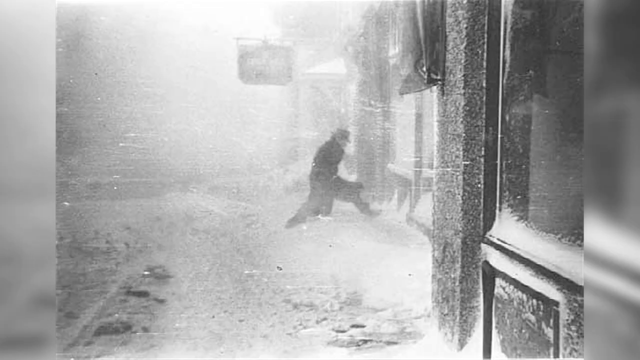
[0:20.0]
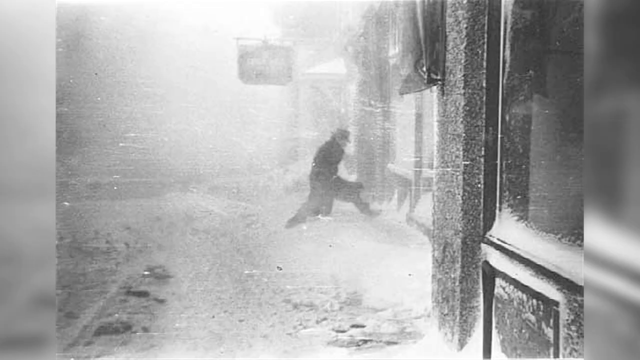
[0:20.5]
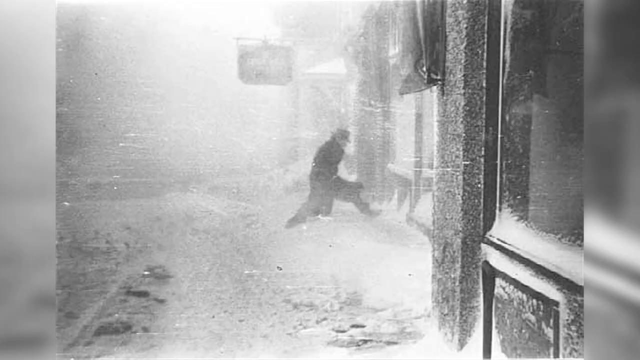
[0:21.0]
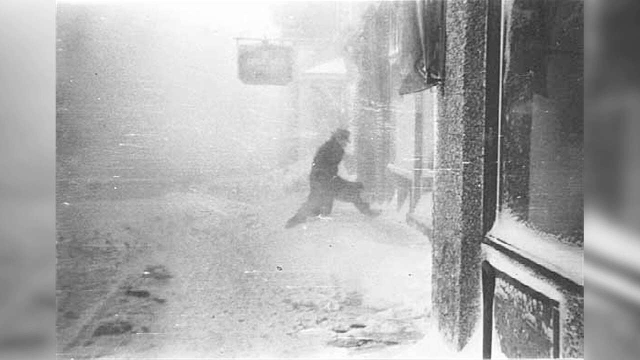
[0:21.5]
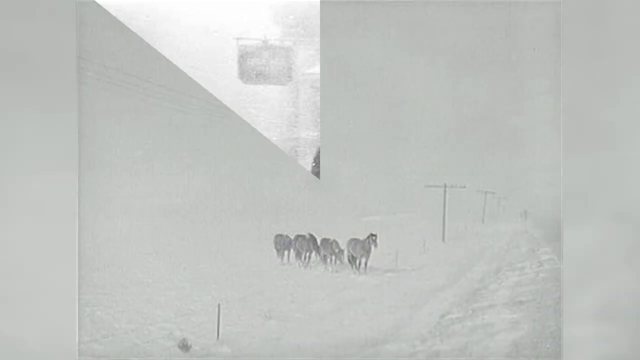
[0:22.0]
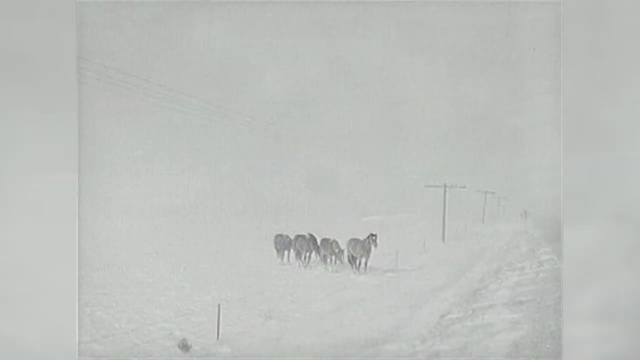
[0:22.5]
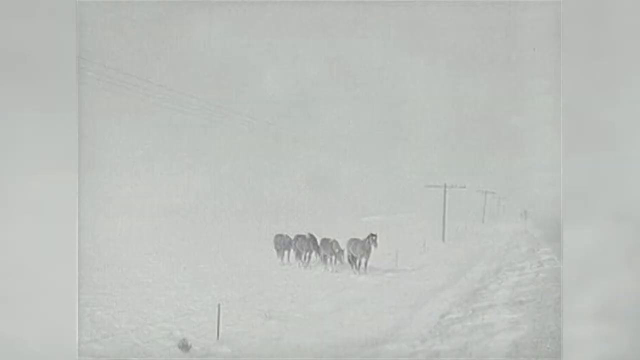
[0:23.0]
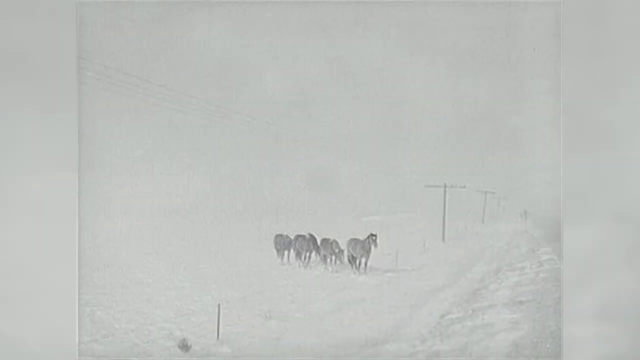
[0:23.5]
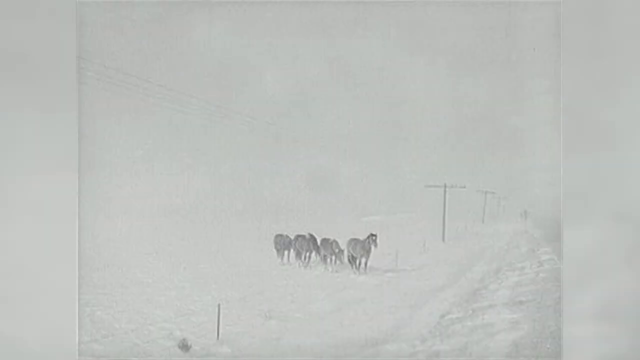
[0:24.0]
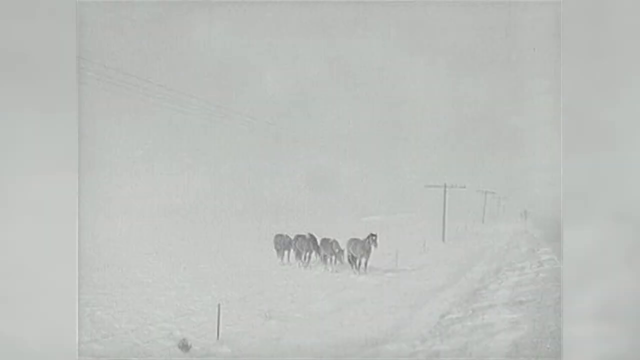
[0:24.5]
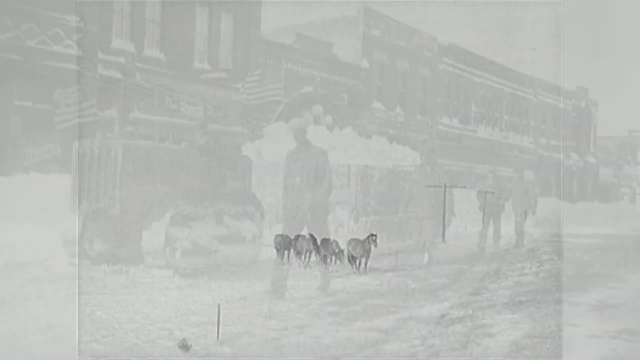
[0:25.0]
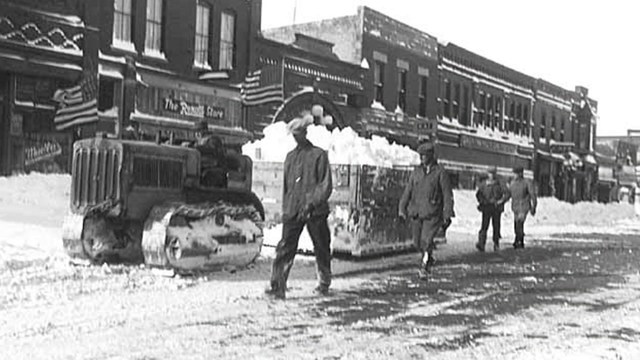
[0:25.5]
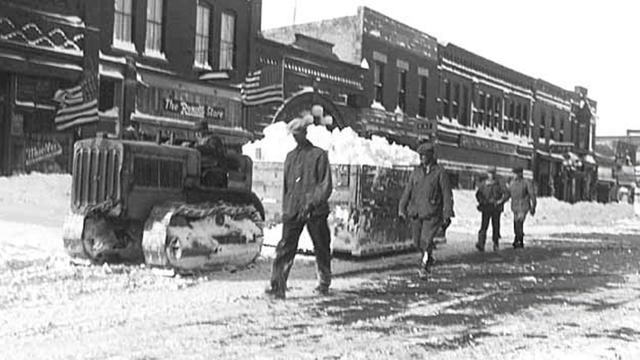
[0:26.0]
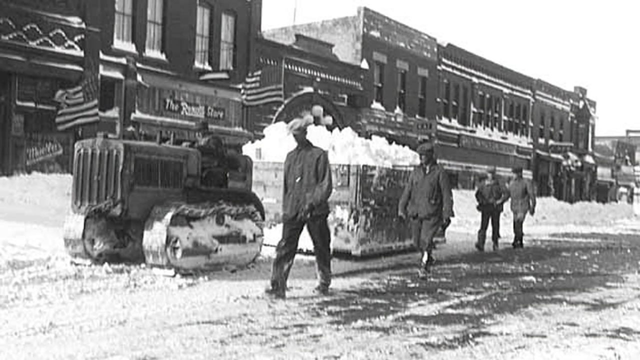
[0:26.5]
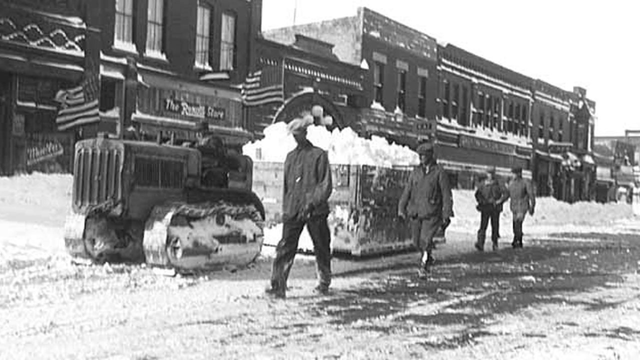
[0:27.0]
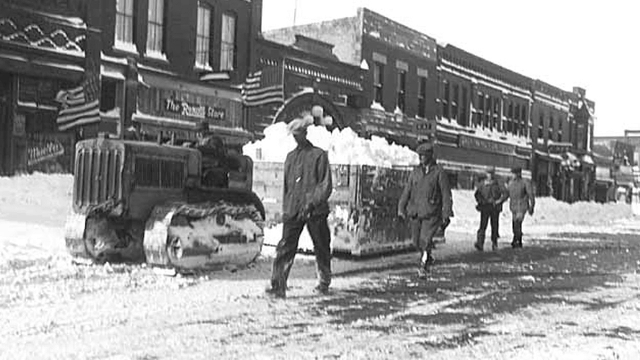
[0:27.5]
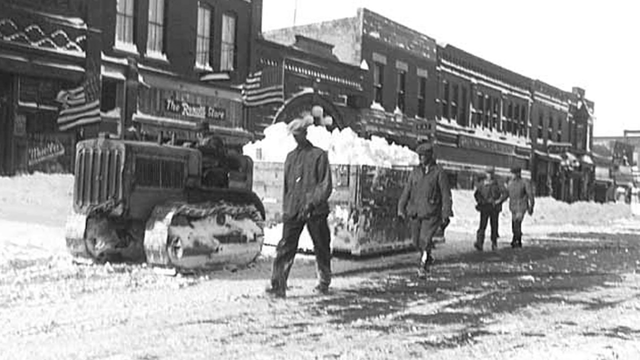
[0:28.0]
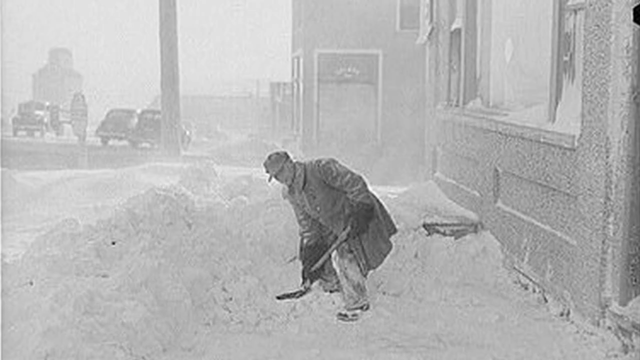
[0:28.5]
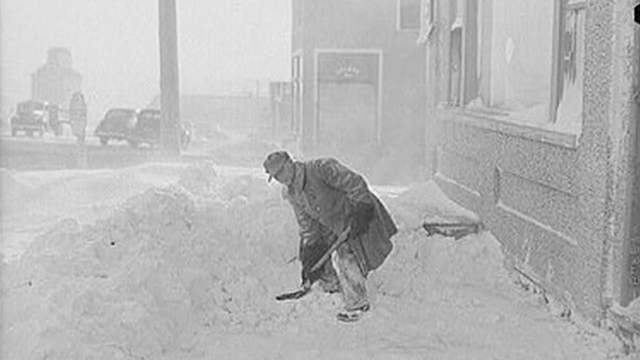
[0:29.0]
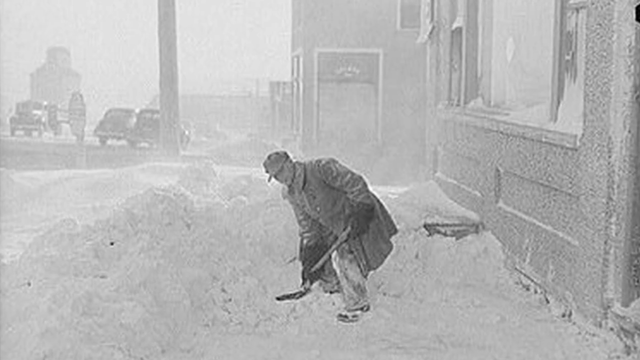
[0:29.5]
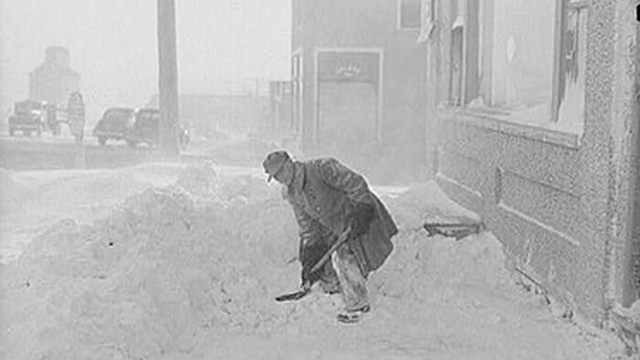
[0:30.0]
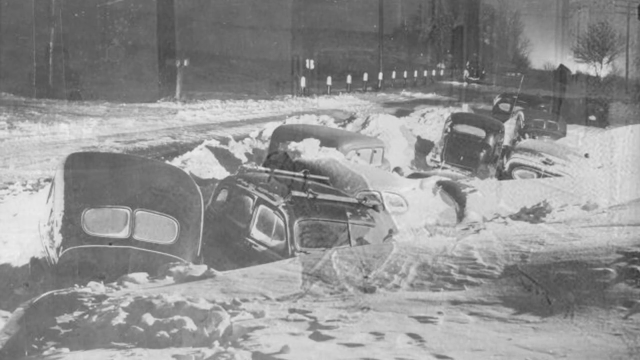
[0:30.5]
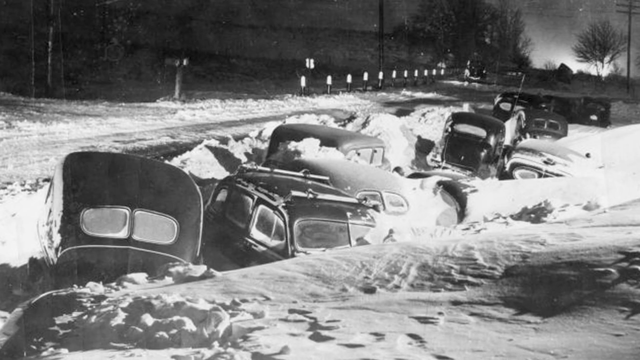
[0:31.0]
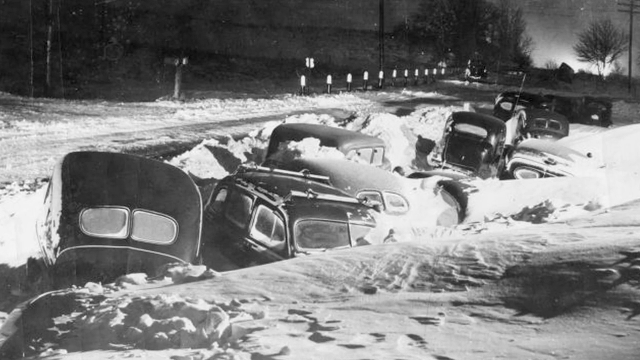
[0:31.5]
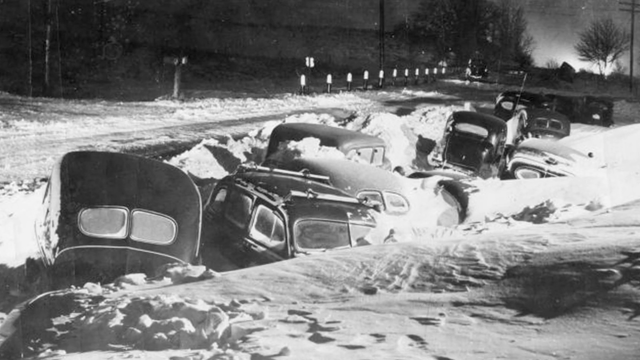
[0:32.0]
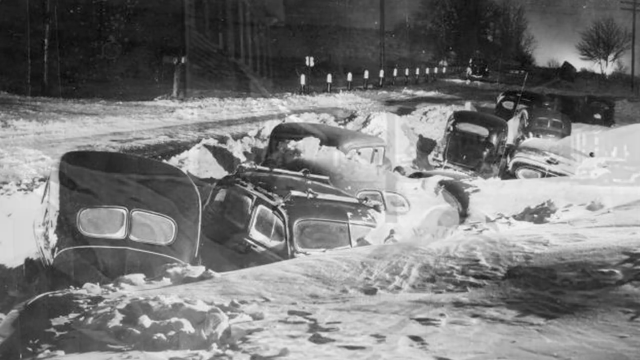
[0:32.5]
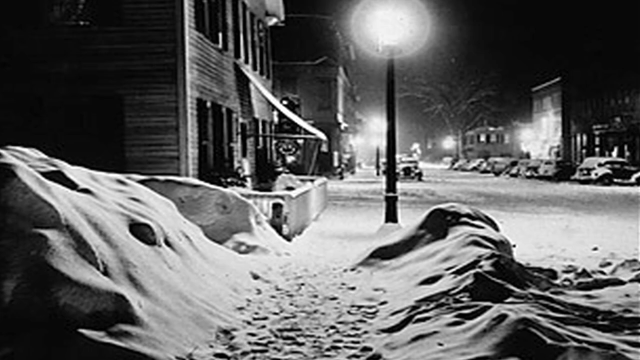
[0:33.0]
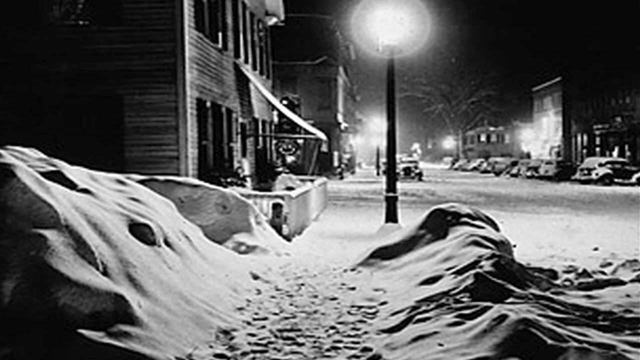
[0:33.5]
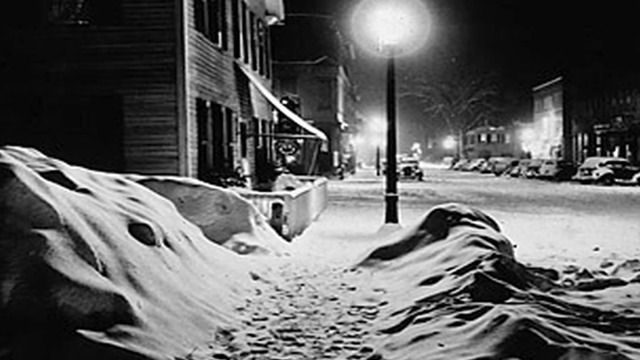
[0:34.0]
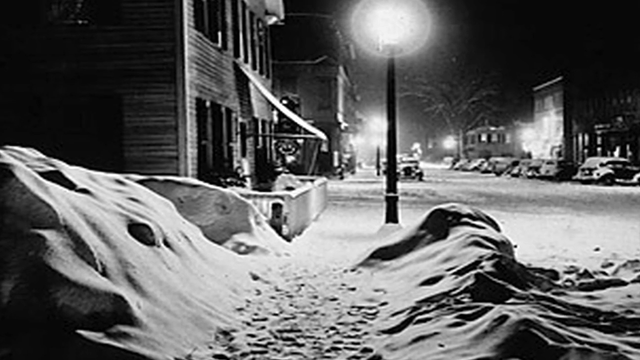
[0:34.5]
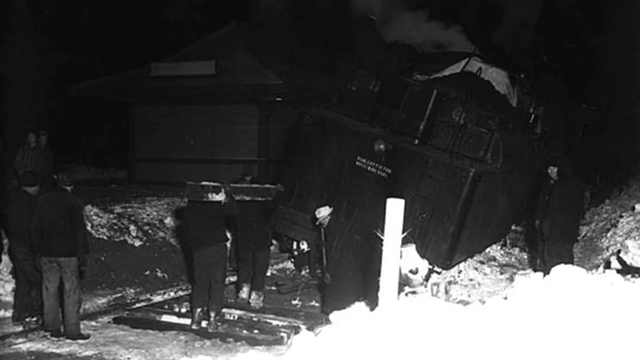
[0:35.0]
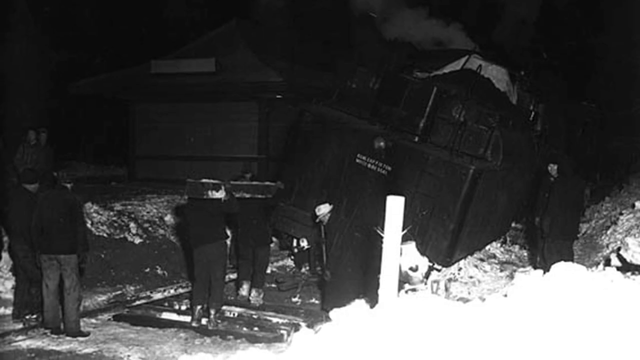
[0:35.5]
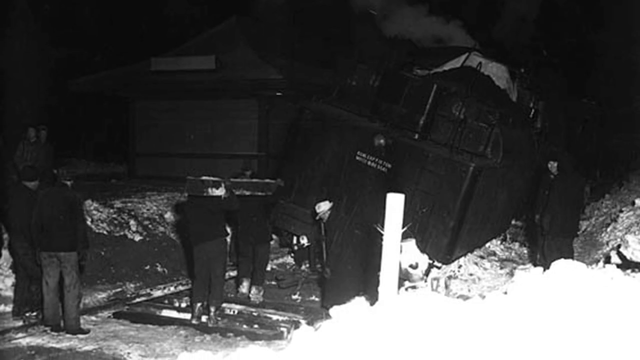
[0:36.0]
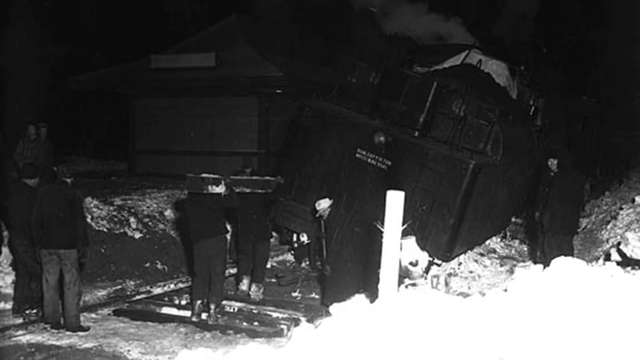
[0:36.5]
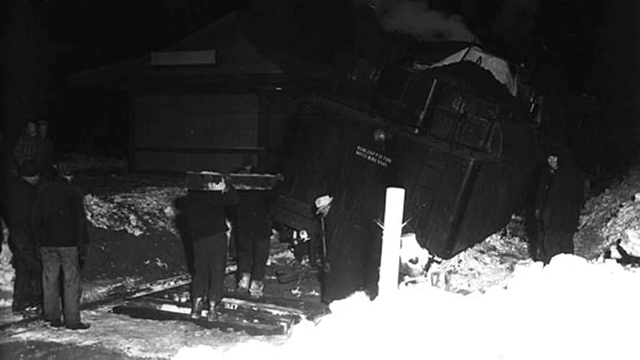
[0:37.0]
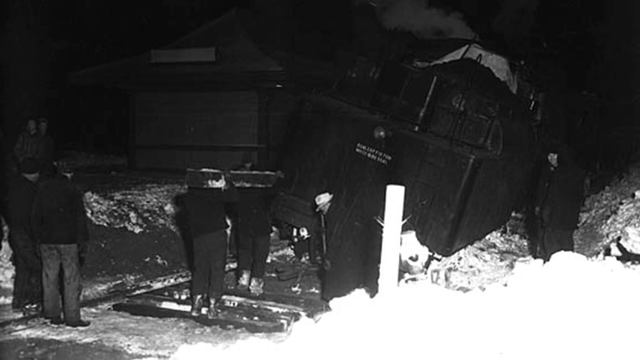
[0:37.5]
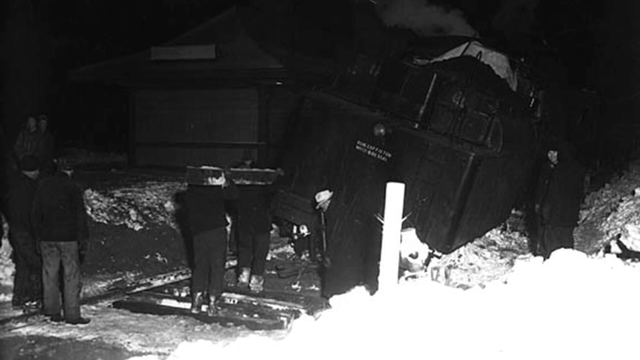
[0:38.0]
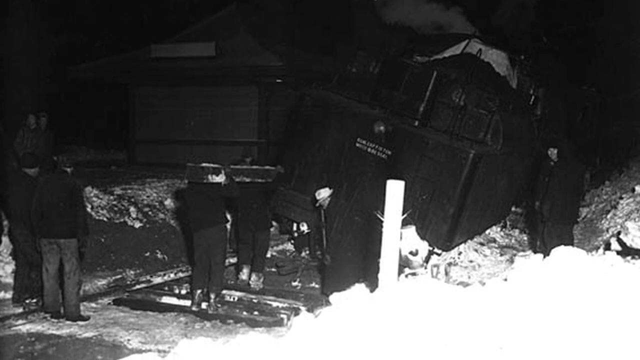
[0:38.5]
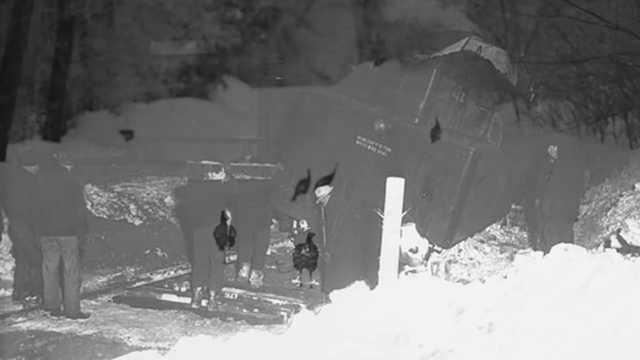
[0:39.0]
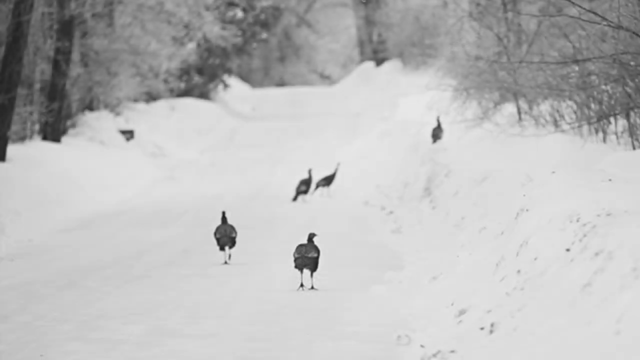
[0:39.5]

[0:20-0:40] Another black and white image shows a man wearing a hat, most likely a fedora, and a trench coat or coat of some kind, who appears to be attempting to walk into a store. He is seen in profile about 20 feet from the camera, taking long, striding steps toward the building with his hands tucked in his pockets. The snowstorm is so violent that the town almost appears overtaken by fog, and he is only faintly visible. The street is covered in snow and the background is pure white. Another image shows four horses walking in a line across what appears to be farmland, as indicated by a very small wire fence at the bottom that extends away from the camera; the horses appear to be in a pure white scene, with the ground covered in snow and the sky so fogged out it cannot be seen. Another image shows various men in worker uniforms walking alongside what appears to be some sort of tractor with treaded tires, towing a bin full to the brim with snow. A man in an older outfit shovels snow in front of a building, followed by another scene of cars buried under snow and a street at night covered in snow.